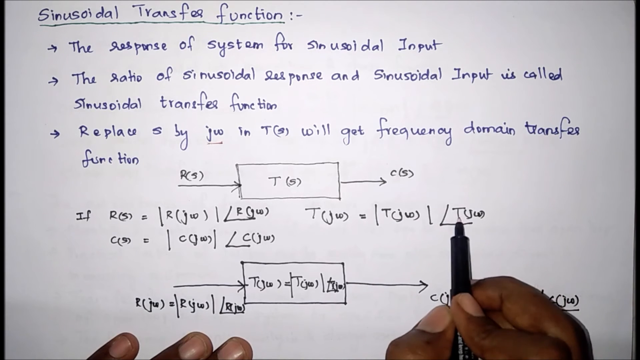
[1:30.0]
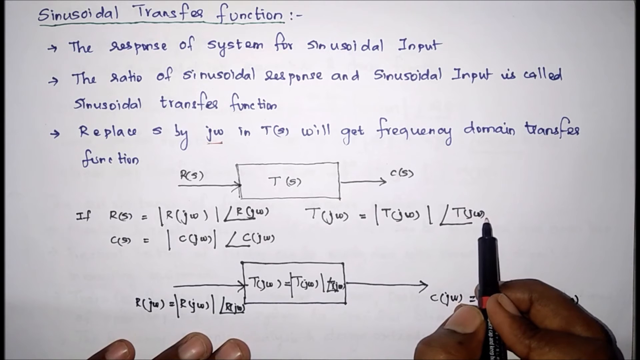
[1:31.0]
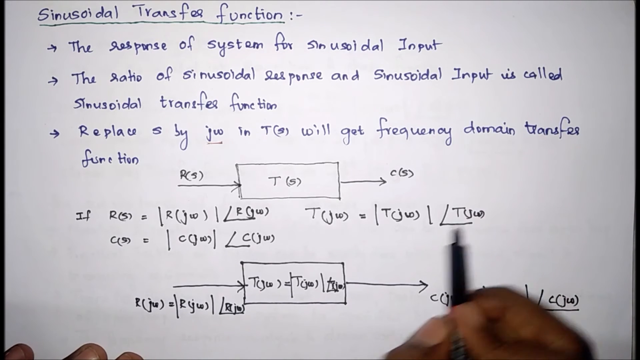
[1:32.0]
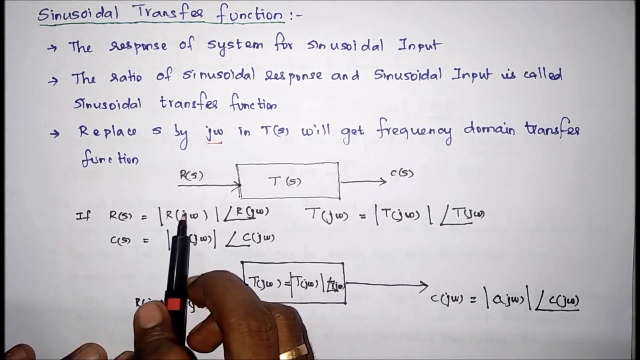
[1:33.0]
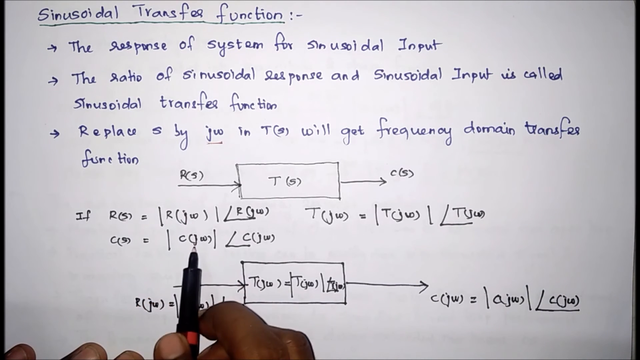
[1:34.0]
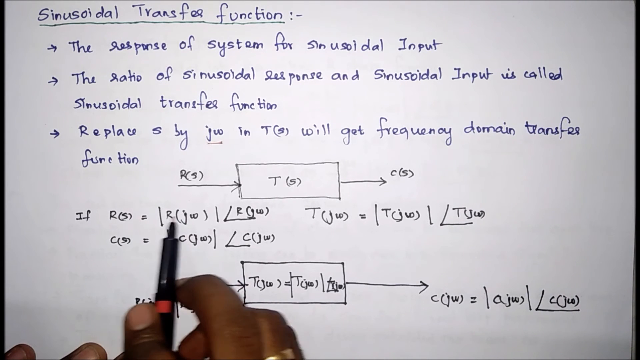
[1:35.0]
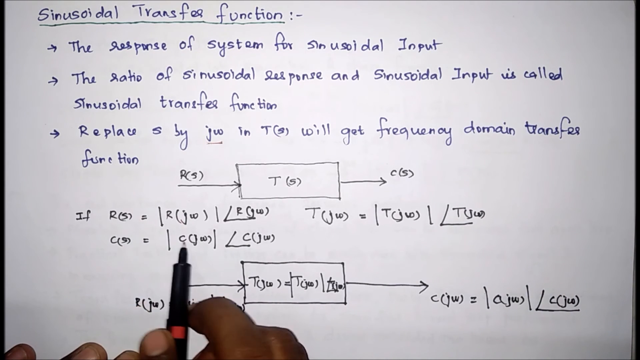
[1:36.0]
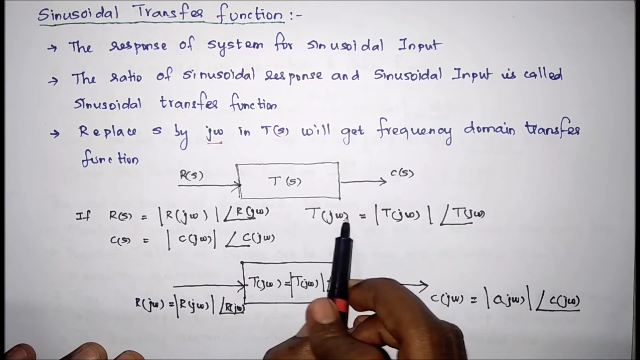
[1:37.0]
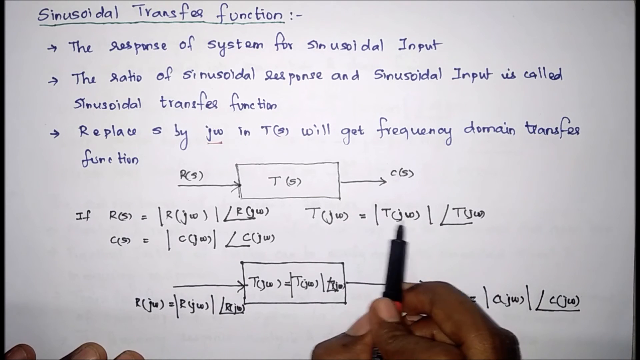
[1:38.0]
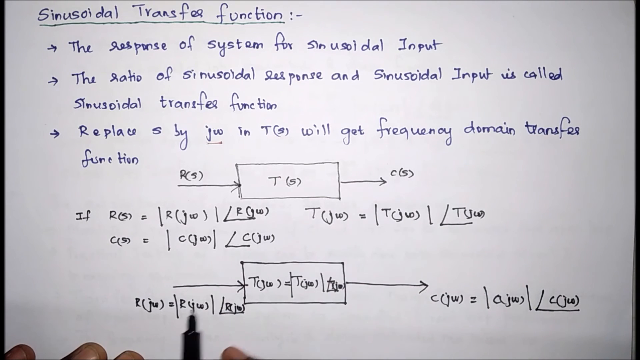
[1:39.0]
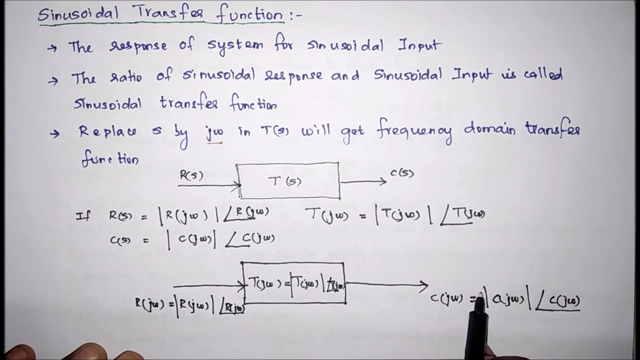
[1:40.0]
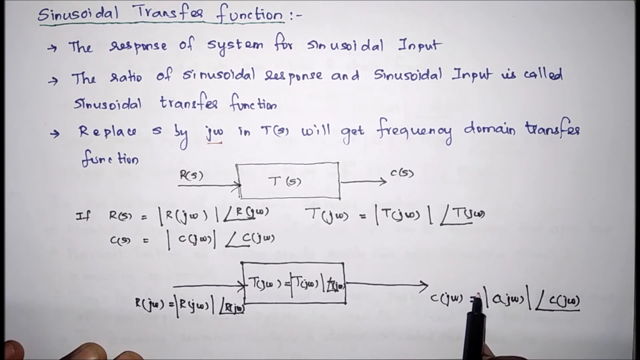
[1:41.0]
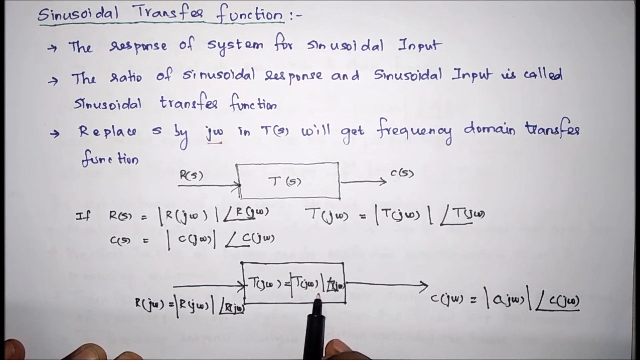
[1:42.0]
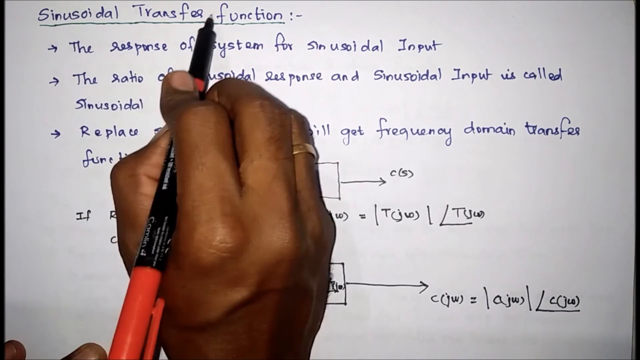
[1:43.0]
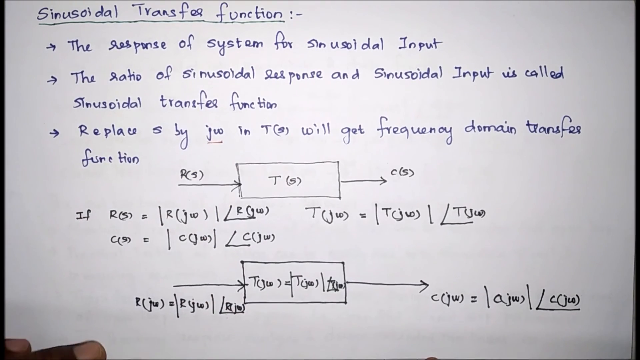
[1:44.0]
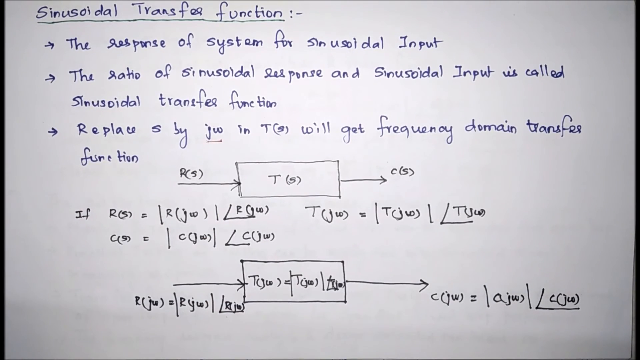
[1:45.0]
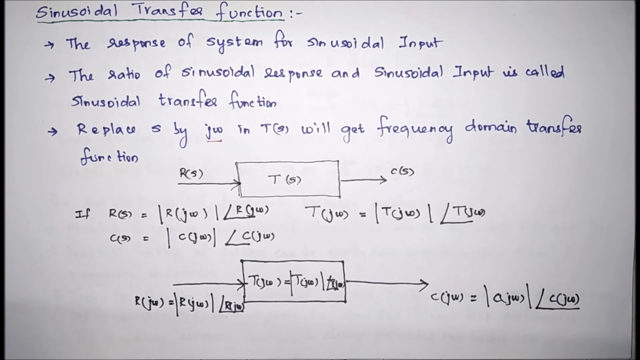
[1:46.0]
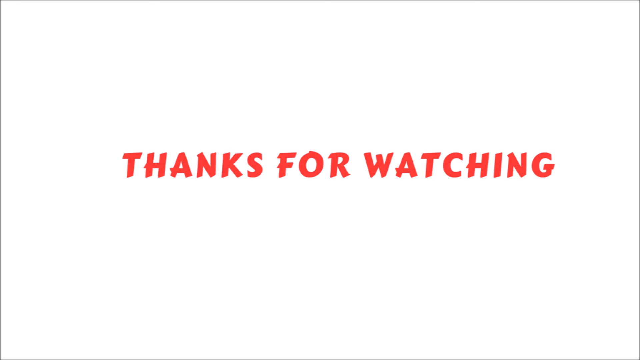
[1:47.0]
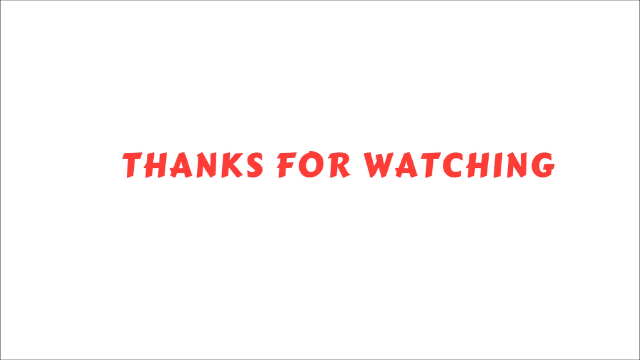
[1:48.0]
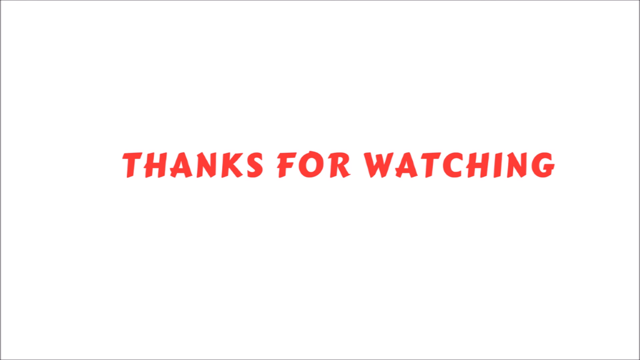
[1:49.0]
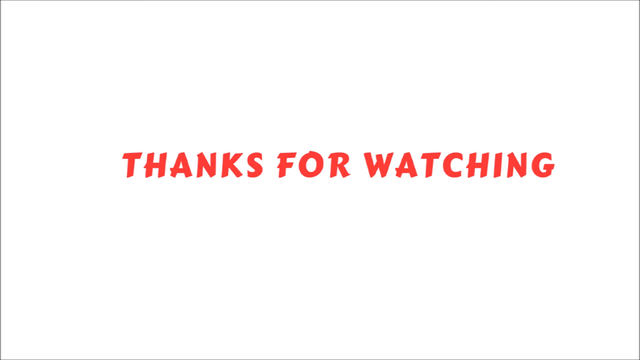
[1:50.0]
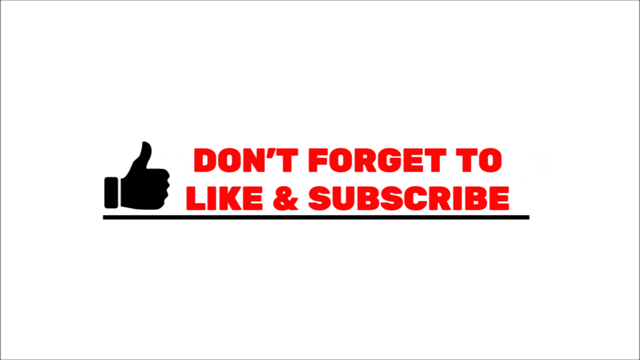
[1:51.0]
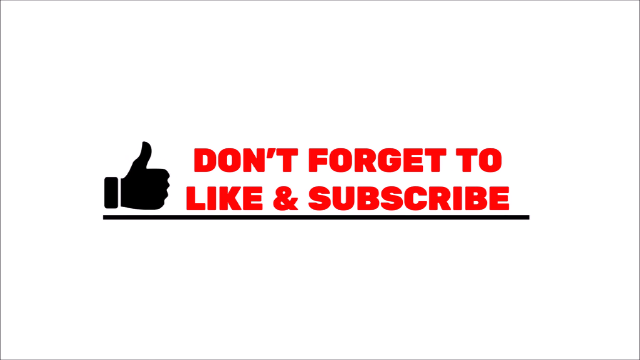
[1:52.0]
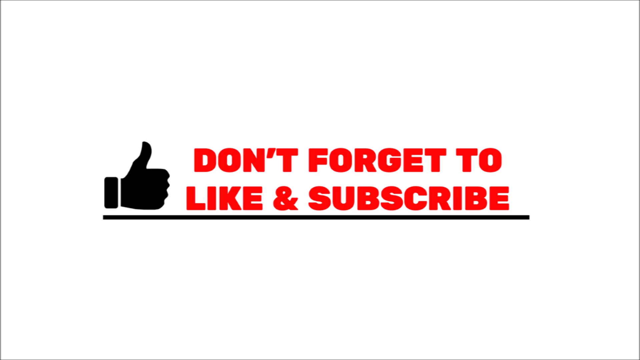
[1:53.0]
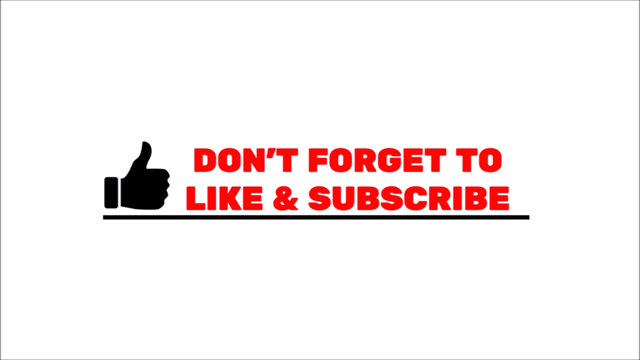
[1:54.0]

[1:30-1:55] A black person holds a black pen and moves it over a handwritten note, seemingly explaining the concept written on it. The pen is in the right hand, while only part of some fingers of the left hand can be seen. Judging by the movement of the pen, the person seems to be explaining an equation and possibly a reaction in the bottom part of the note. Later the pen moves to the top of the note, where the title "Sinusoidal Transfer Function" is written, with three statements in a bulleted list below it. The video then transitions to a screen showing the text "Thanks For Watching" in red on a white background. This changes to the text "Don't Forget To Like & Subscribe," also in red, in front of a thumbs-up symbol, with both above a black line.